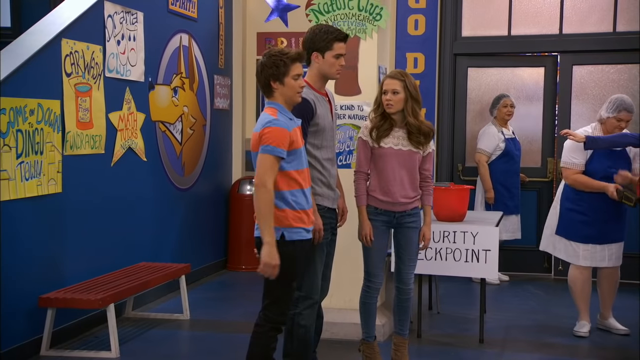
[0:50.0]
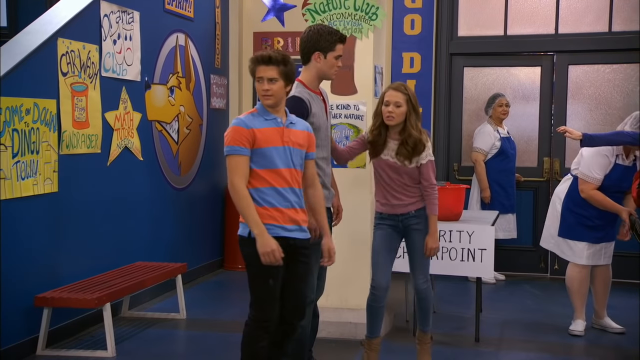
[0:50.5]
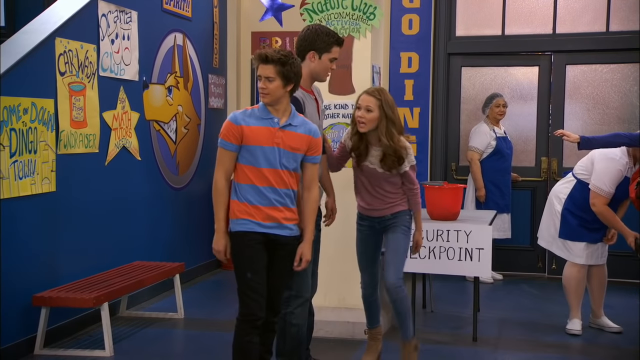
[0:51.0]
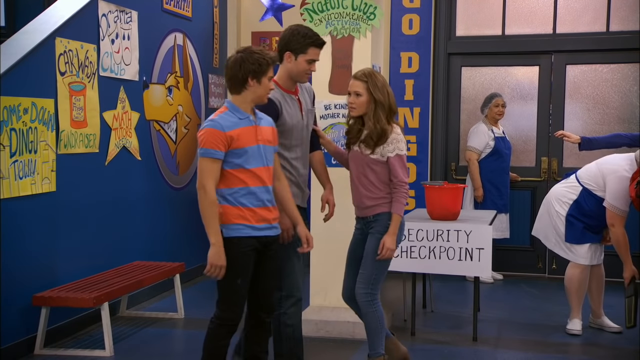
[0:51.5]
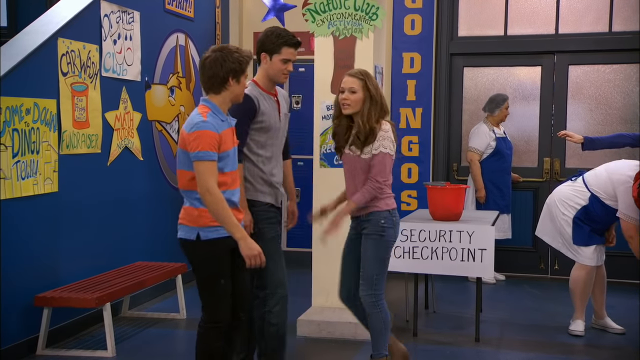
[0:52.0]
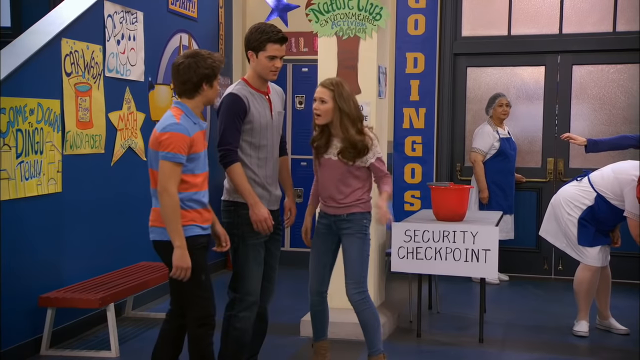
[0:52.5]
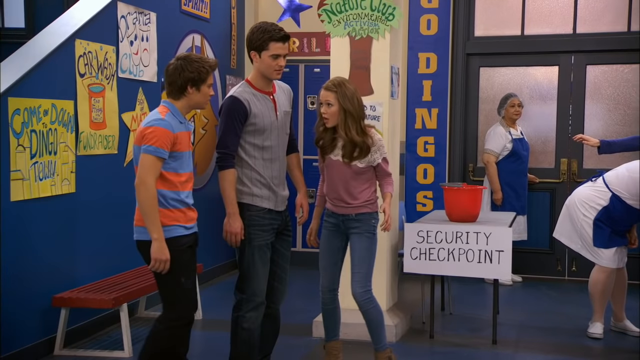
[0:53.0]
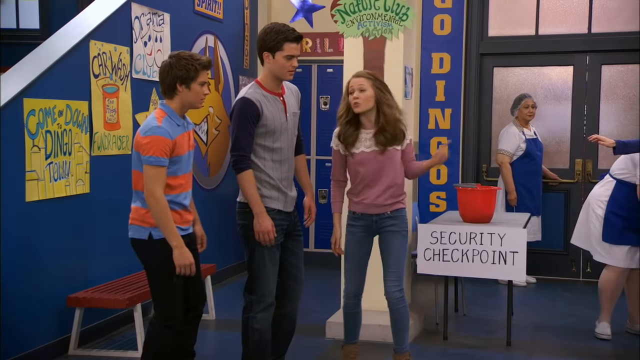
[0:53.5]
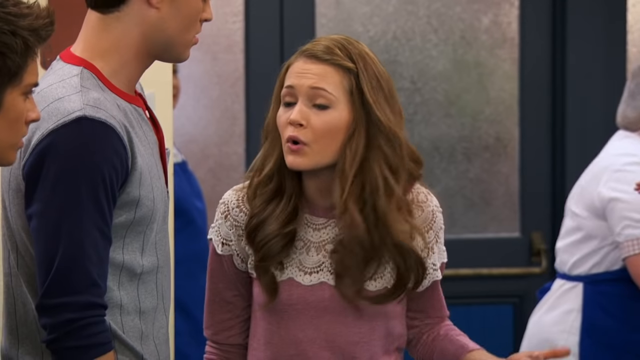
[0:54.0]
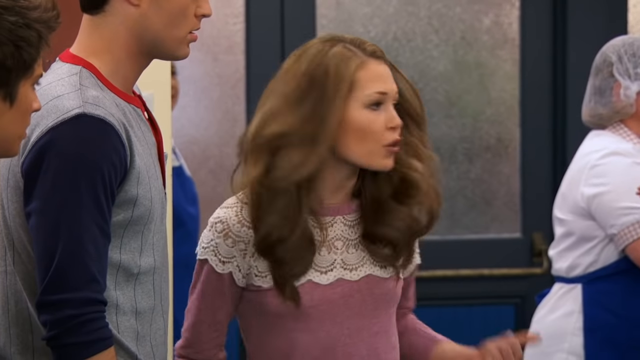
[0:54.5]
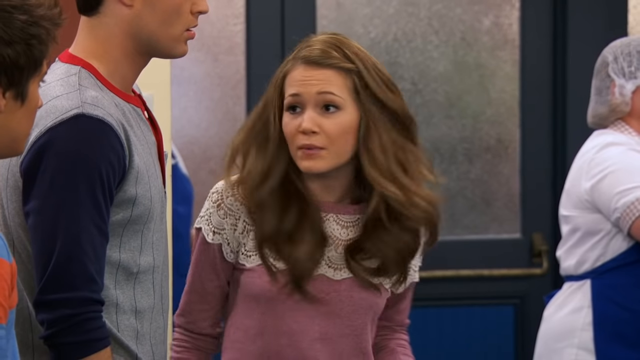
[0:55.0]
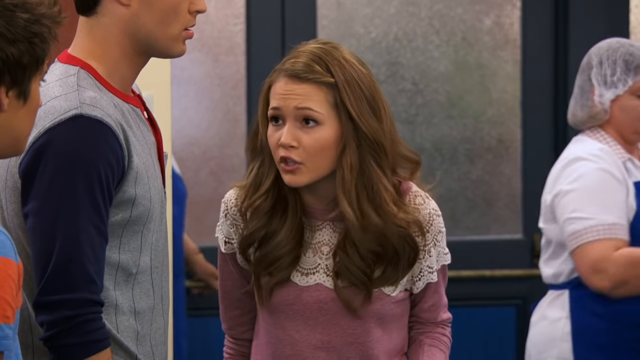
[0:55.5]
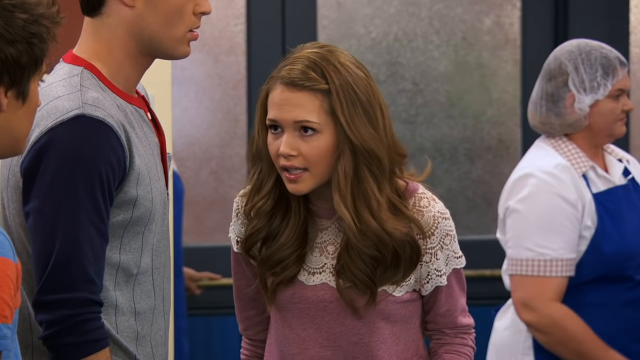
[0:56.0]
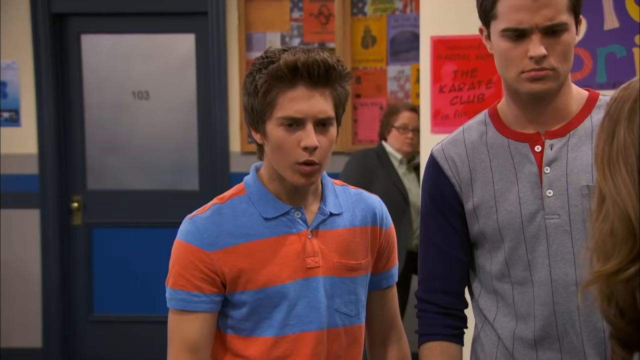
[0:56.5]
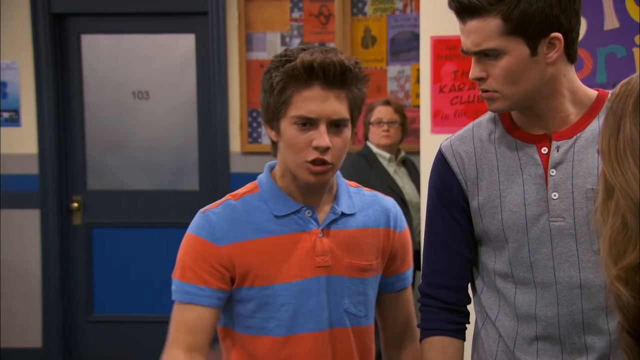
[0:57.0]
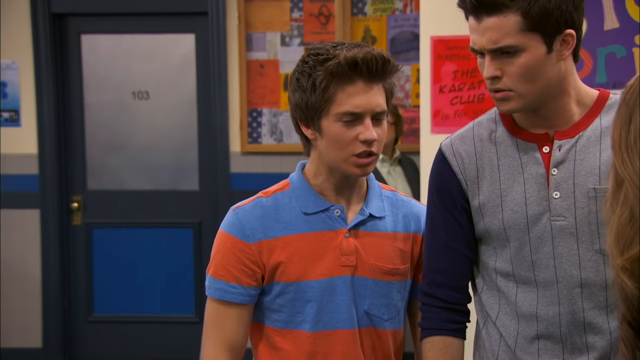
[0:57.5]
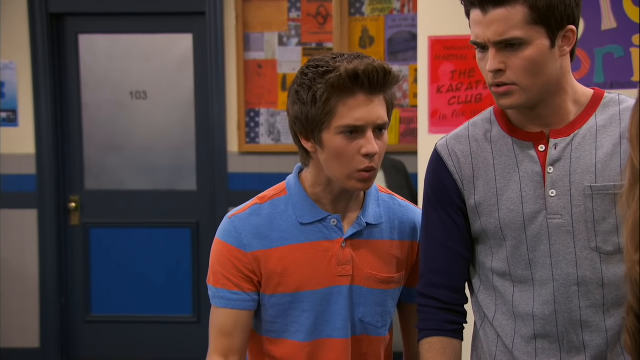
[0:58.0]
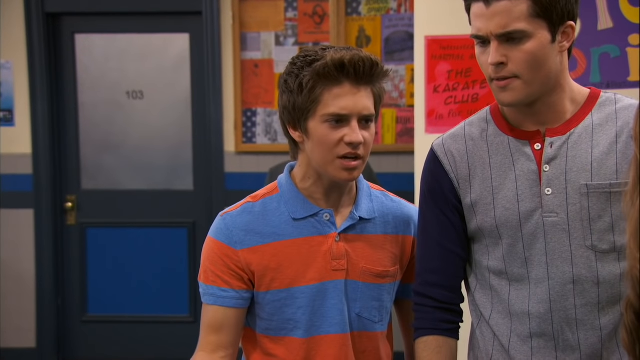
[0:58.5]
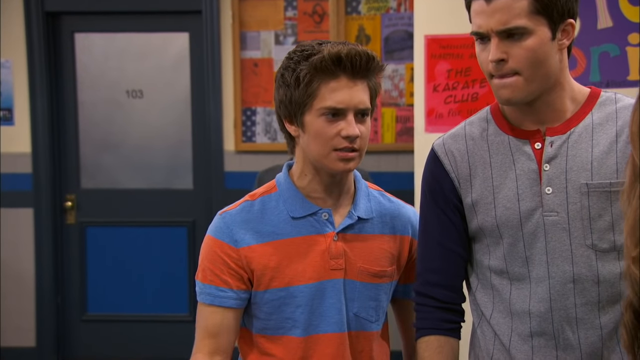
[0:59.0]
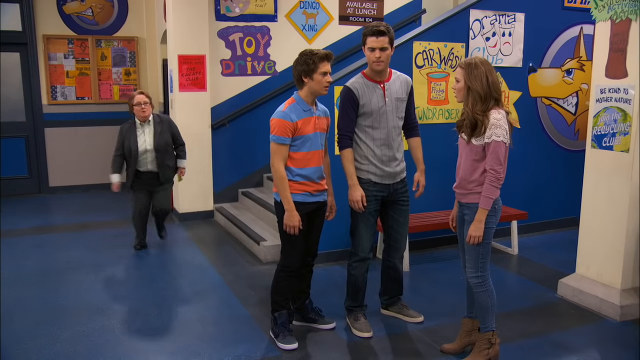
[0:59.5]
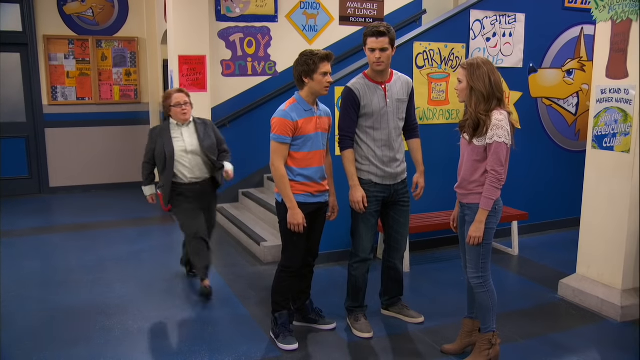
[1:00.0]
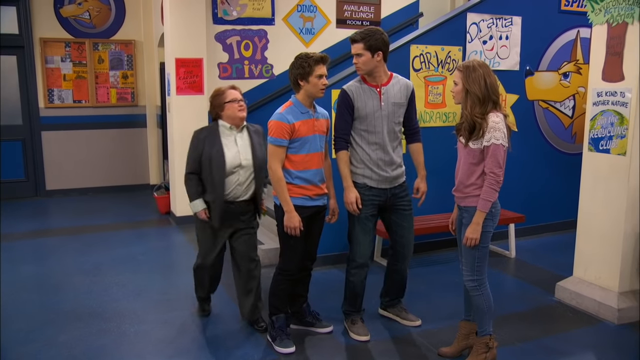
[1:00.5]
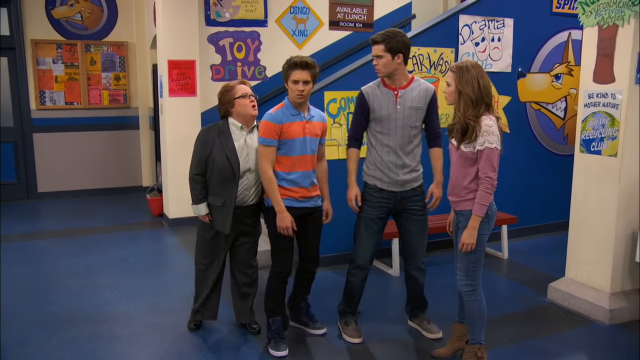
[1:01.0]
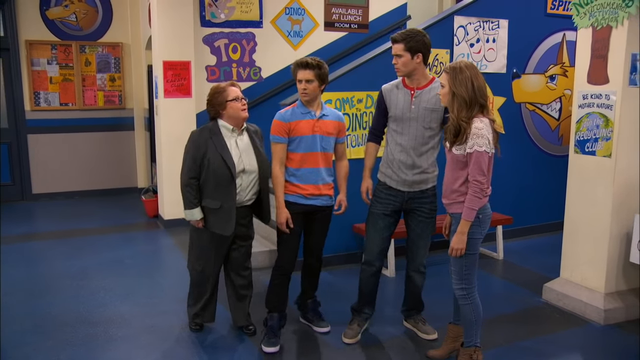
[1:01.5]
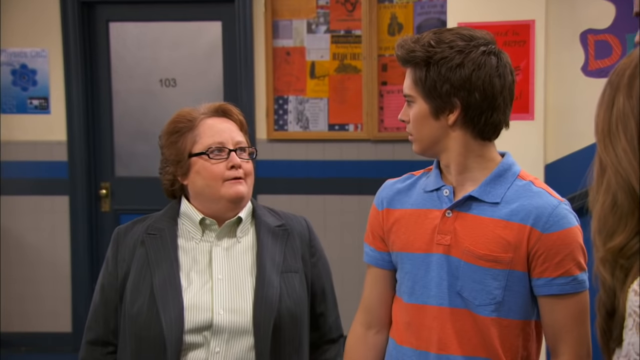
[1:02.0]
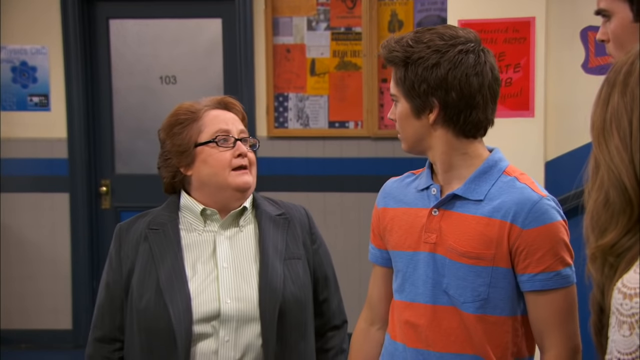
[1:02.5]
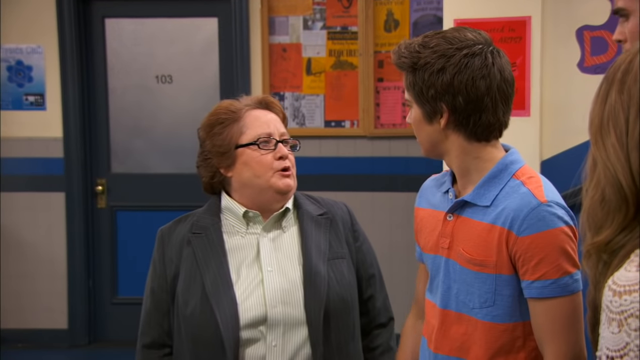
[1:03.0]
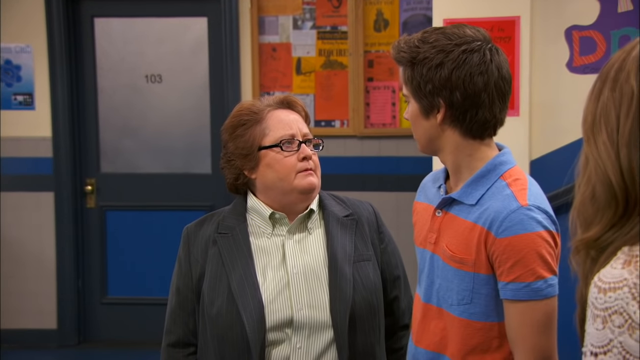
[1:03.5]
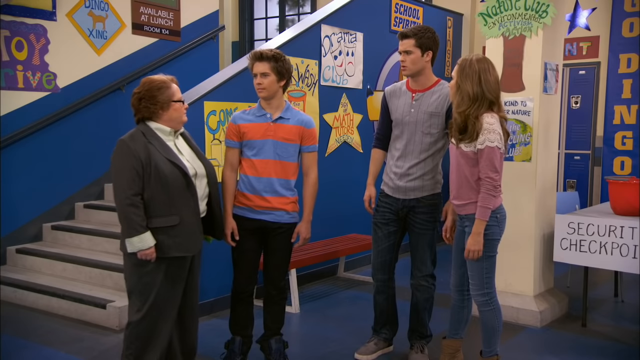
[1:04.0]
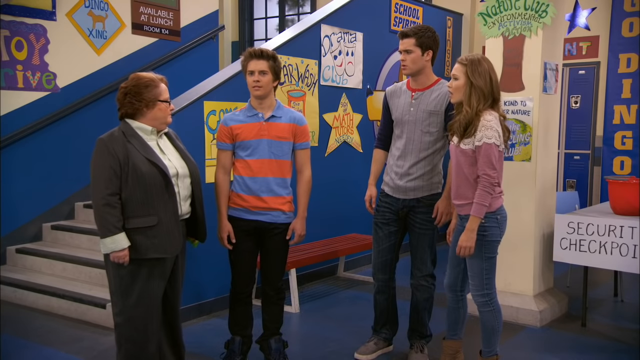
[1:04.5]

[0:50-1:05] The young girl who walked down the steps starts talking very passionately to the two boys she is with, looking somewhat agitated. The boy in the blue and orange striped shirt also looks agitated. They are still by the steps inside the school, and the steps are visible behind them as they talk. The teacher in the glasses looks at them and then runs up quickly behind them. The girl who is talking has long brown hair, and both boys have short black hair. At one point a door behind the teacher is visible, labeled "103"; the door has a gray top and a blue square at the bottom. A picture on the side of the steps advertises a car wash, and there is a bulletin board on the far wall behind the steps.